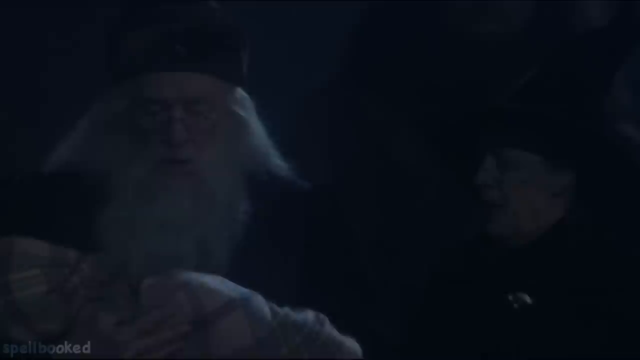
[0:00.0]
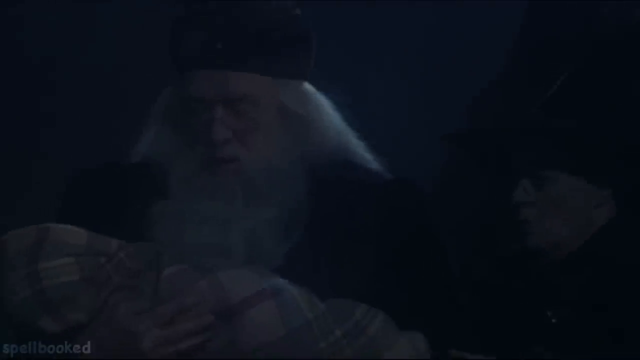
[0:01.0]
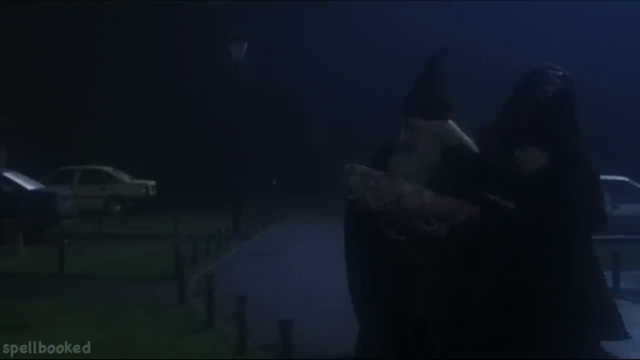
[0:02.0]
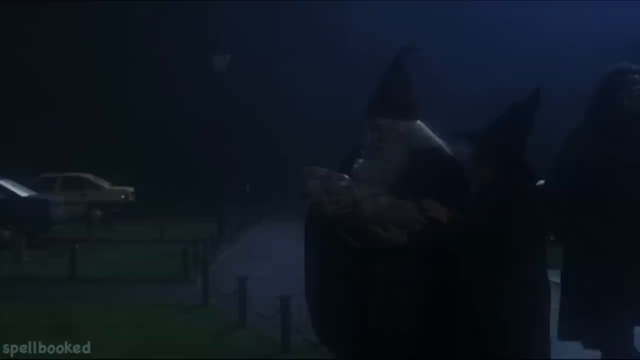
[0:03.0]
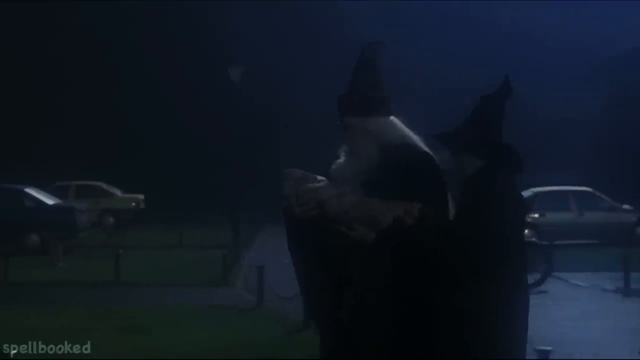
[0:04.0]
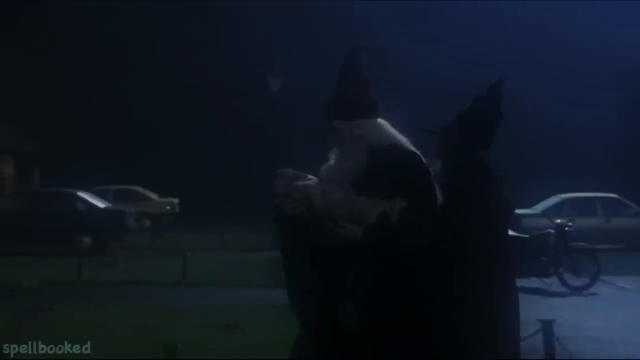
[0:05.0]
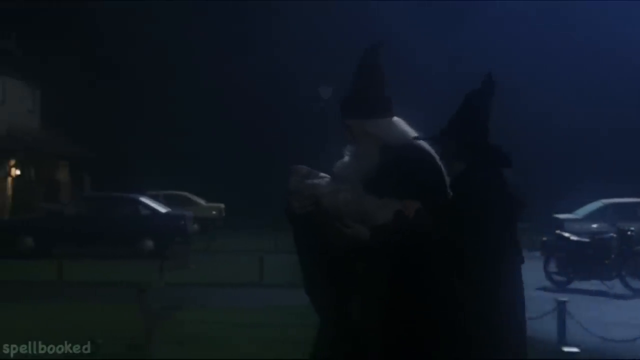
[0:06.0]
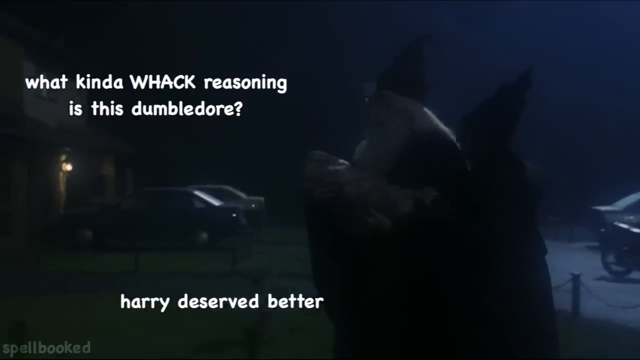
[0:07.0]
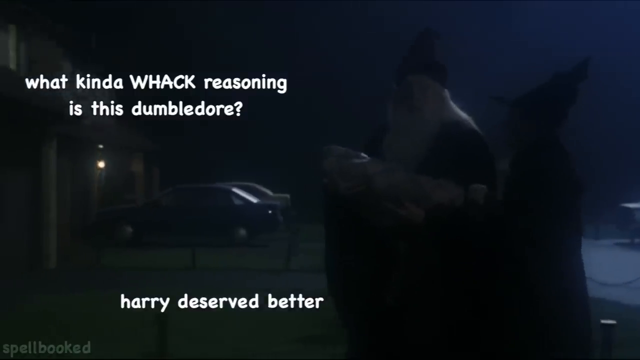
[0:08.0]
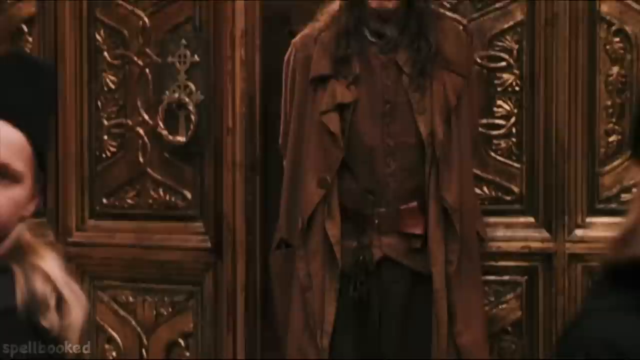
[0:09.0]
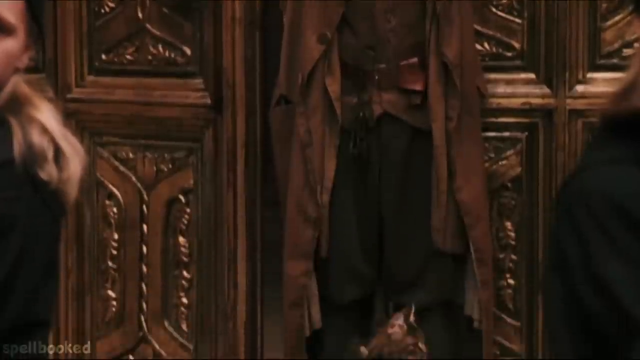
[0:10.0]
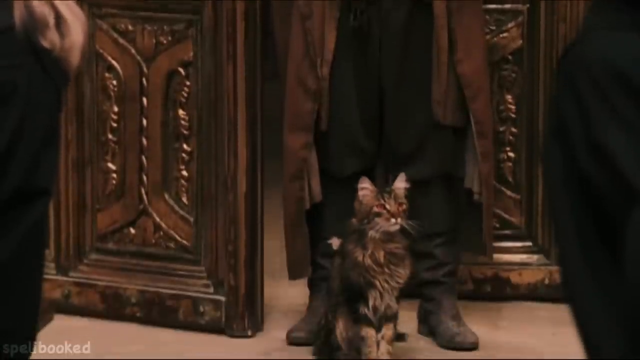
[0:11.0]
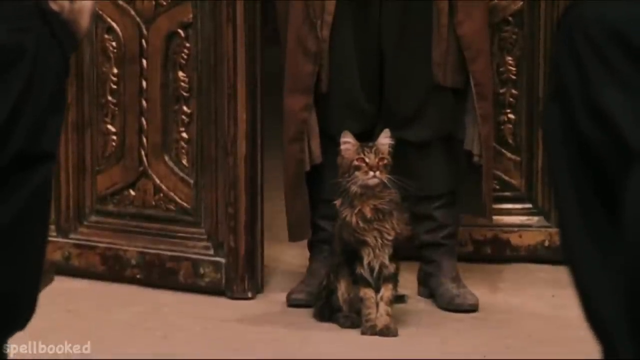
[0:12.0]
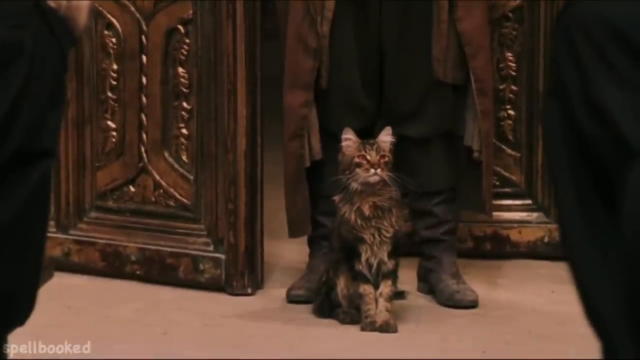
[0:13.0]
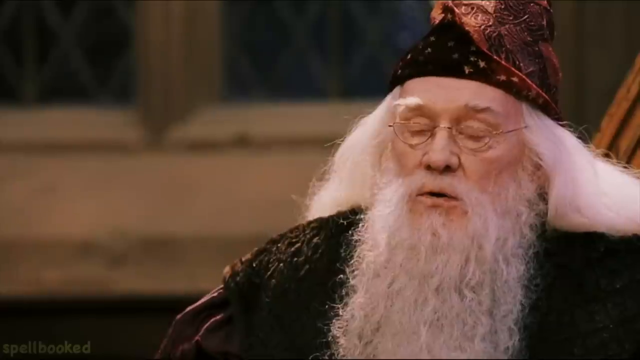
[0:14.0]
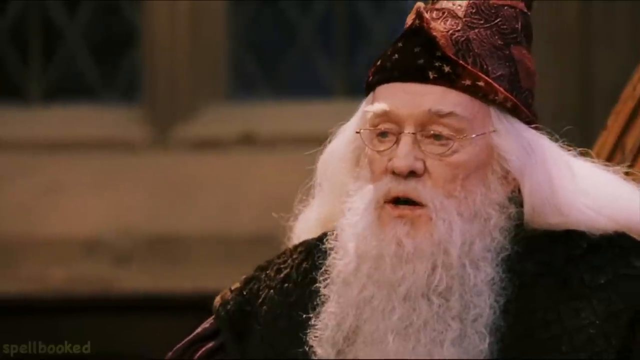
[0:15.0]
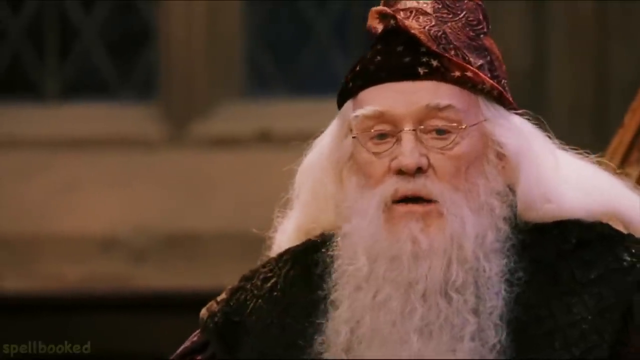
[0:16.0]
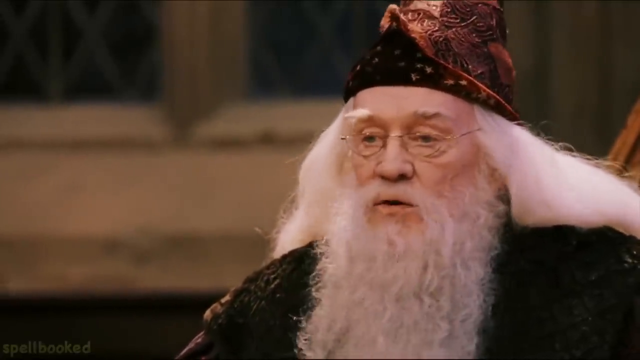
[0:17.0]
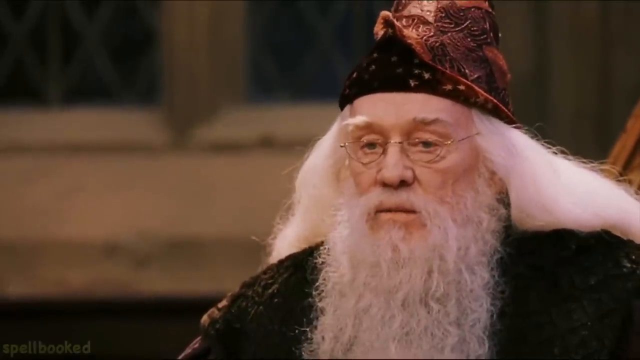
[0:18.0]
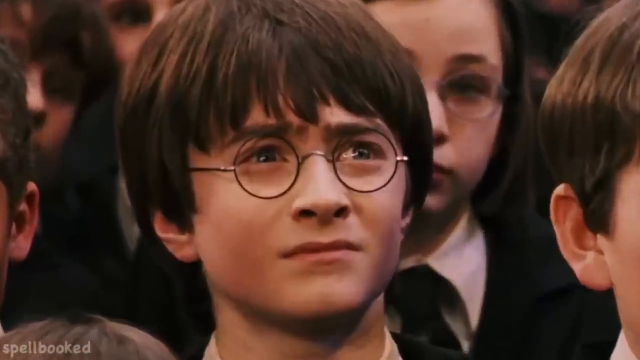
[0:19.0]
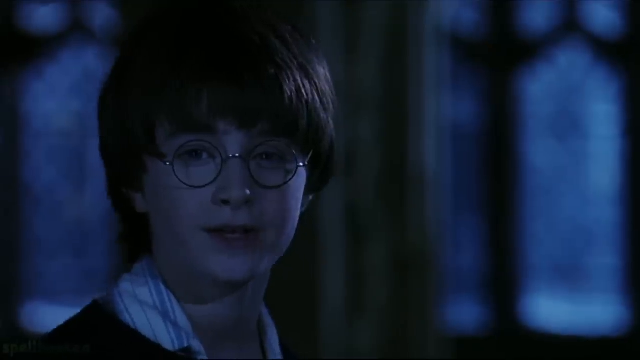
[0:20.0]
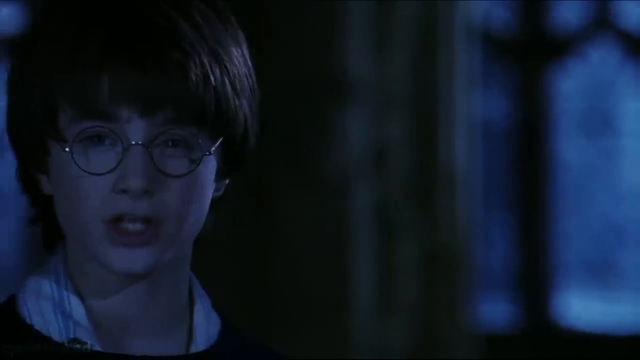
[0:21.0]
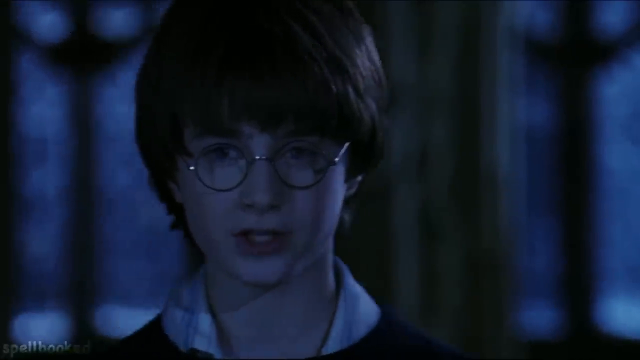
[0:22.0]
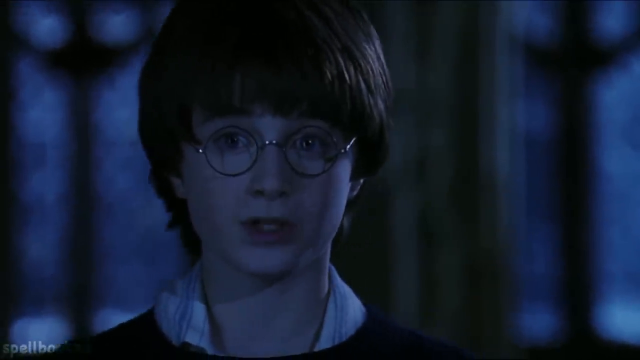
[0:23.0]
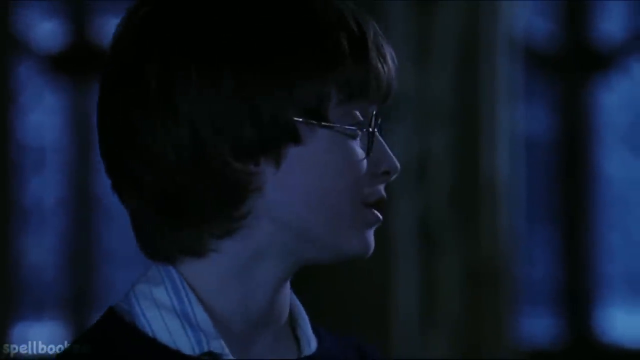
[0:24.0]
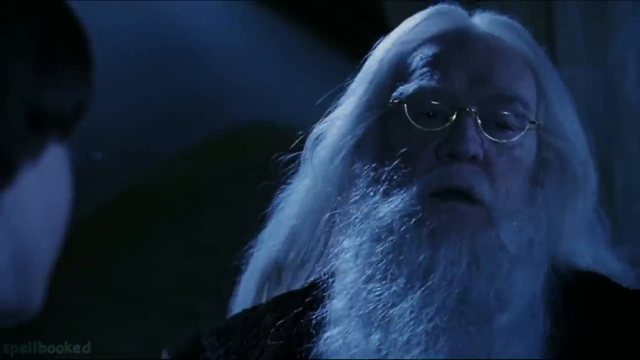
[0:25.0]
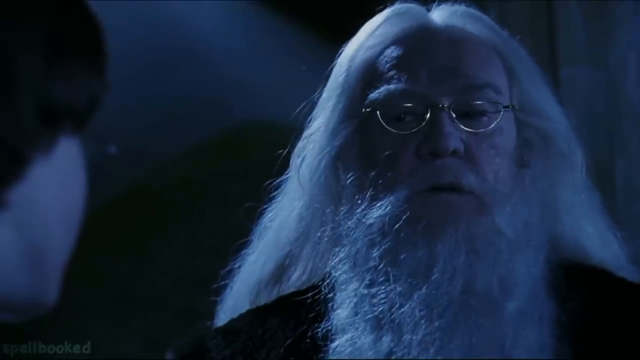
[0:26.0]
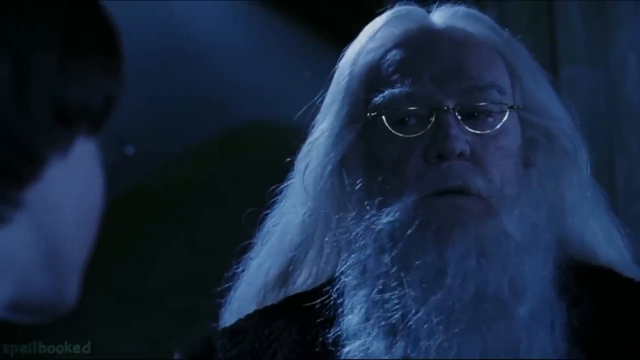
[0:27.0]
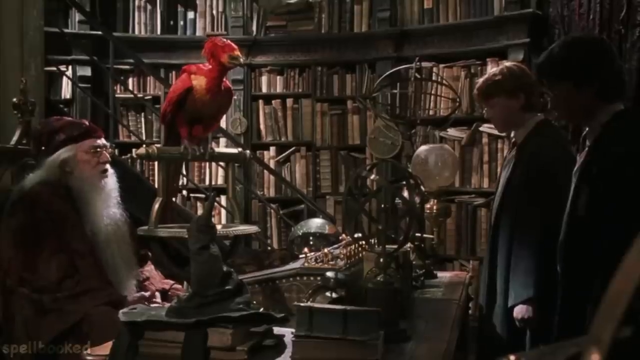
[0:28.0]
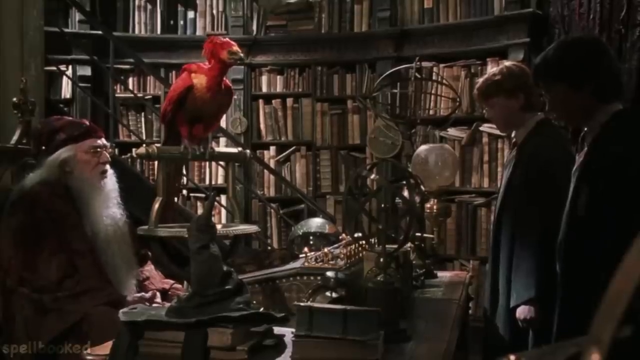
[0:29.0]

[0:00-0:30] The scene is from one of the Harry Potter films, apparently the first one, The Sorcerer's Stone. Dumbledore walks with Professor McGonagall, apparently at night; the screen is so dark that it is almost hard to make out what is going on. Both are older, probably in their 70s. Dumbledore has a blanket in his arms that looks to be a baby. They walk down a paved street, and McGonagall kind of huddles him so he doesn't trip with the baby, repeatedly putting her hand up to them as they walk slowly. Text pops up on the screen: "what kind of whack reasoning is this, Dumbledore?", with the word "whack" capitalized, and at the bottom, "Harry deserved better." The video then cuts to another Harry Potter scene showing the janitor and his cat standing by a very large door. Next, Professor Dumbledore is talking, and the camera zooms in on Harry's face. Then Harry is talking to somebody at night, who turns out to be Dumbledore. They are then in Dumbledore's office, where Dumbledore stands next to the red phoenix, with Harry and Ron in the room with him.